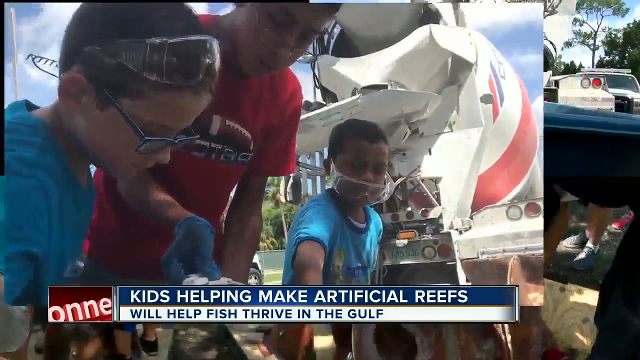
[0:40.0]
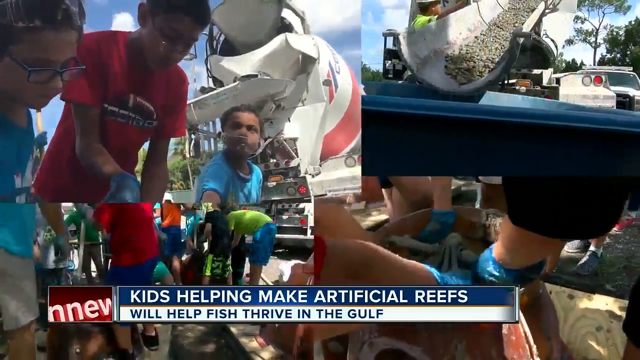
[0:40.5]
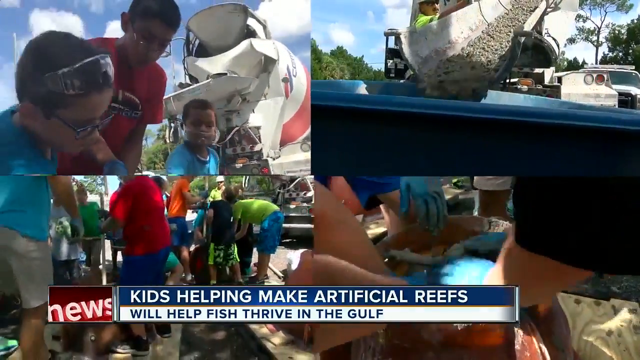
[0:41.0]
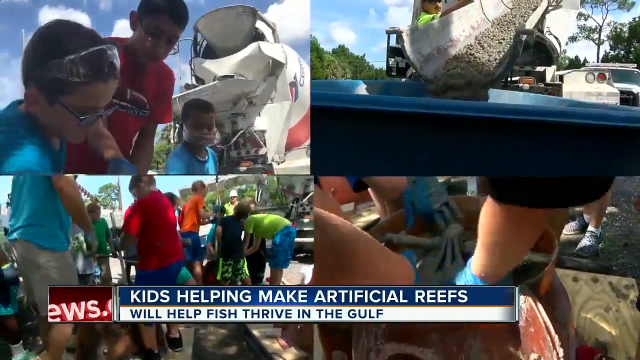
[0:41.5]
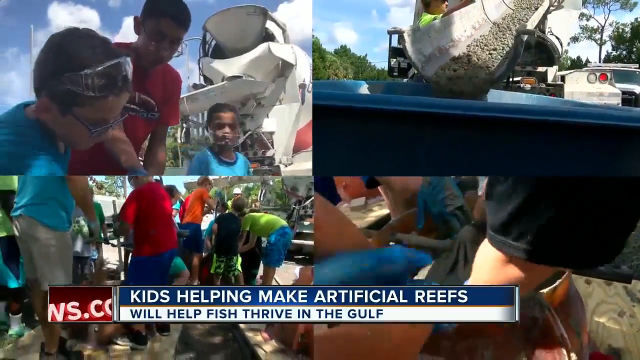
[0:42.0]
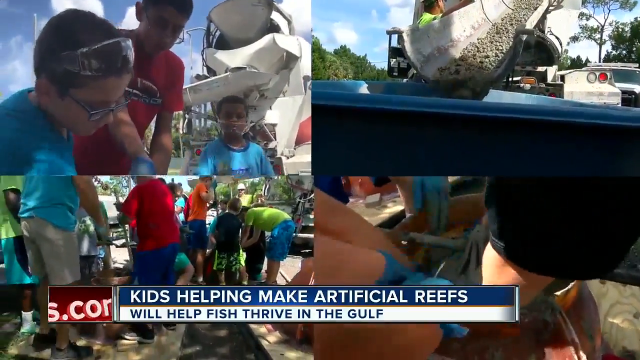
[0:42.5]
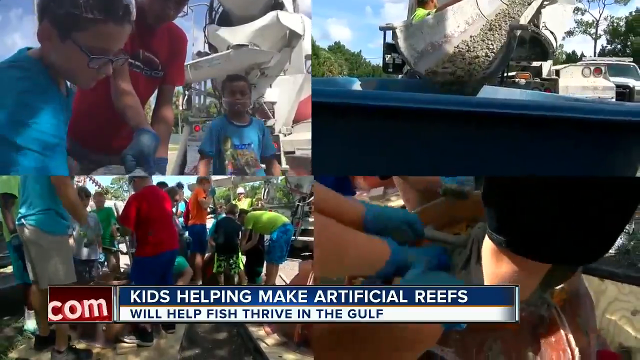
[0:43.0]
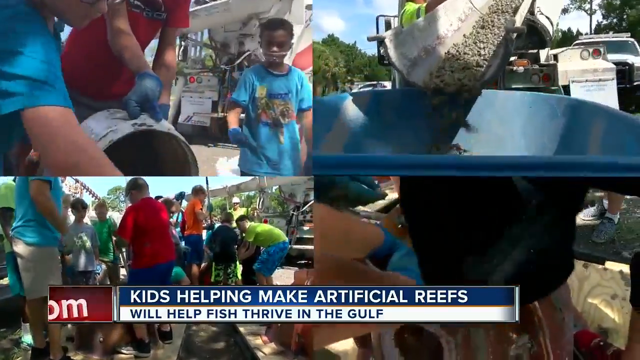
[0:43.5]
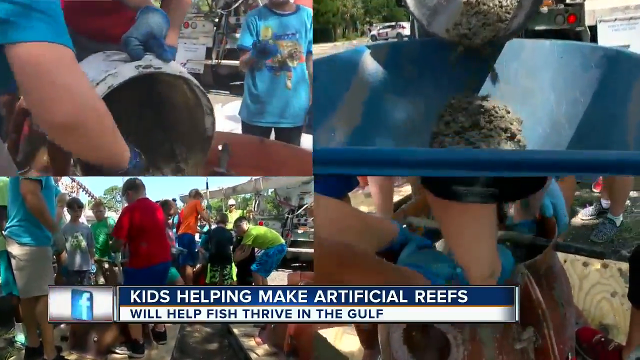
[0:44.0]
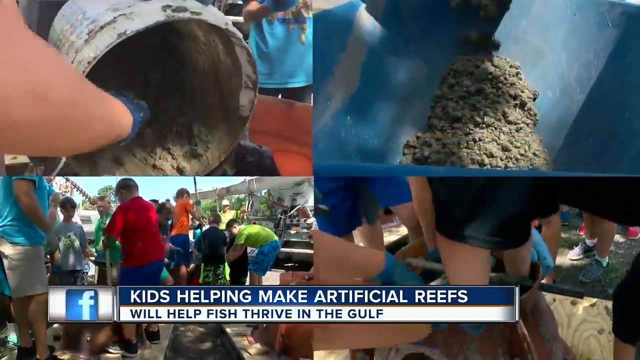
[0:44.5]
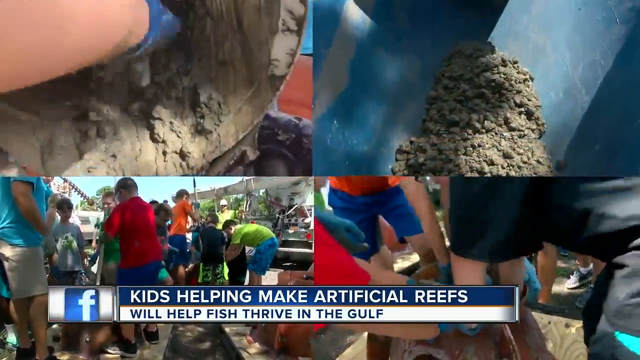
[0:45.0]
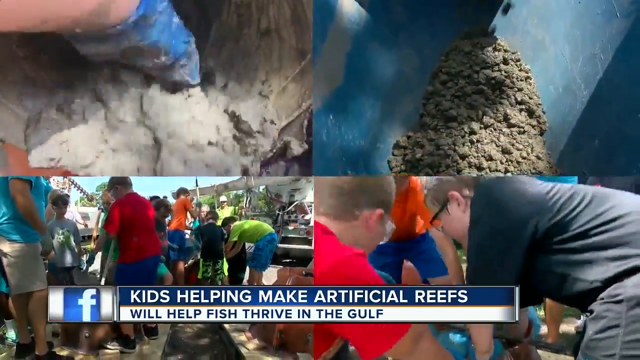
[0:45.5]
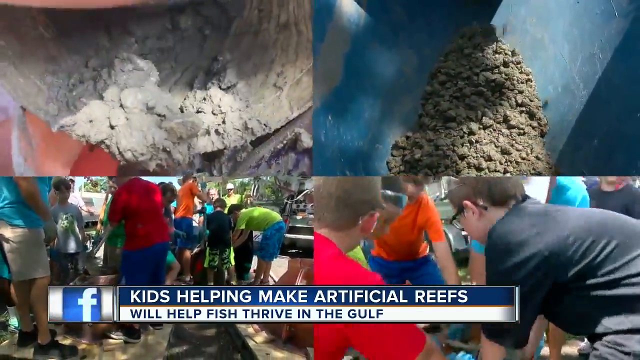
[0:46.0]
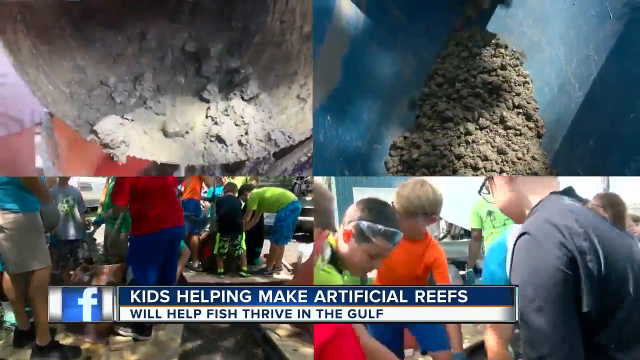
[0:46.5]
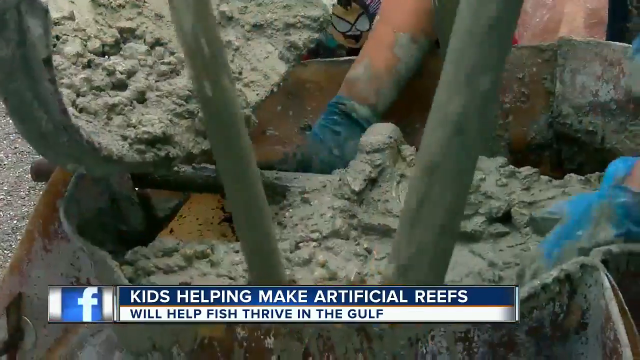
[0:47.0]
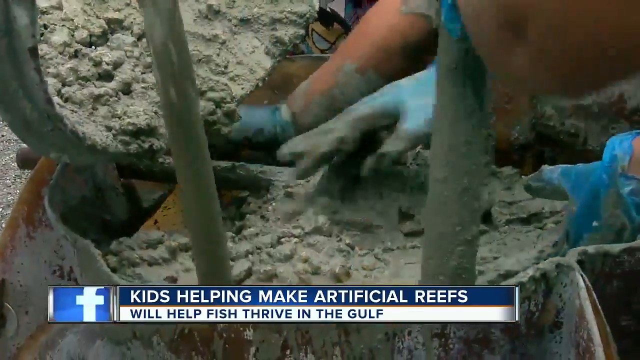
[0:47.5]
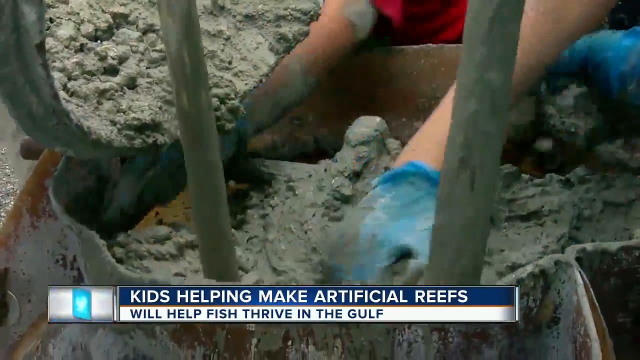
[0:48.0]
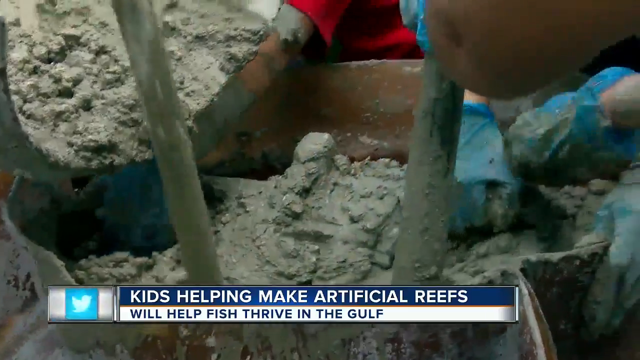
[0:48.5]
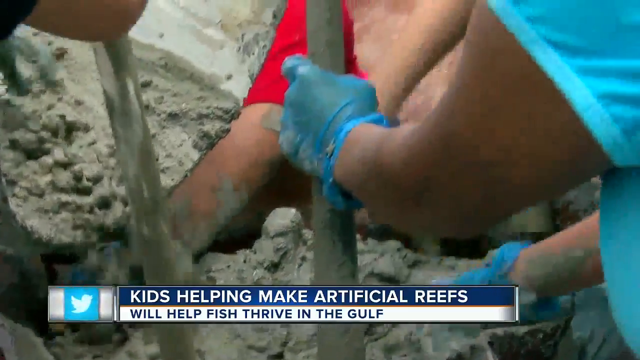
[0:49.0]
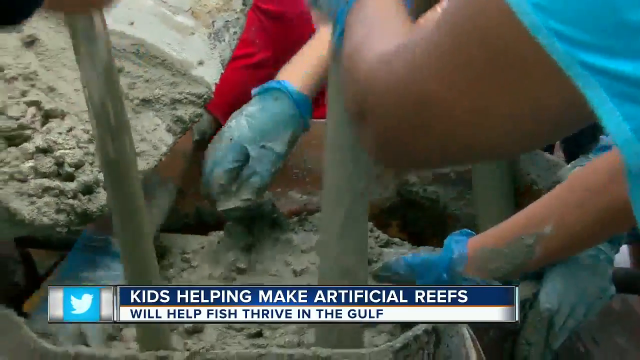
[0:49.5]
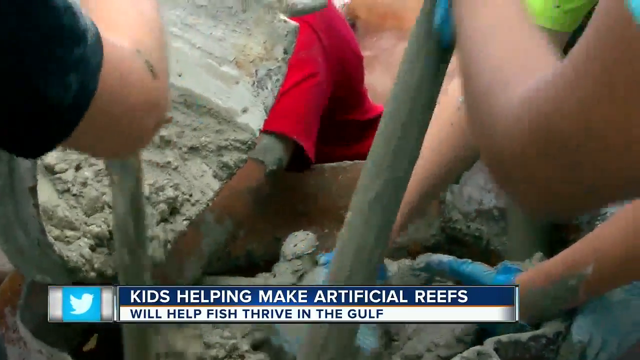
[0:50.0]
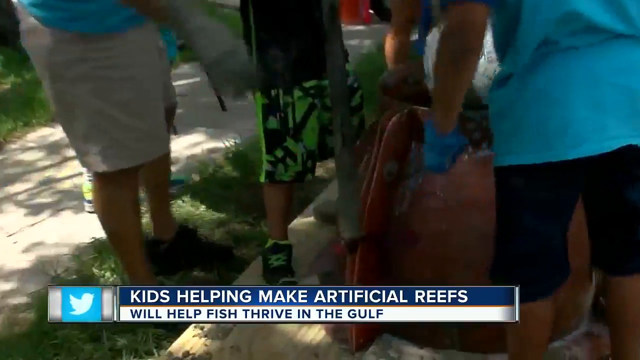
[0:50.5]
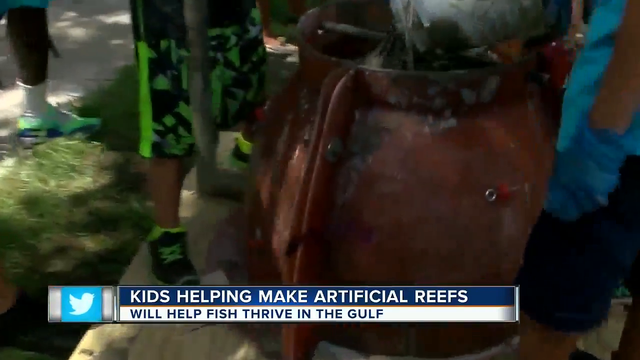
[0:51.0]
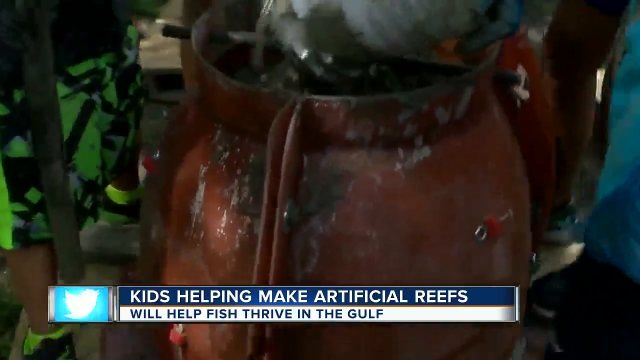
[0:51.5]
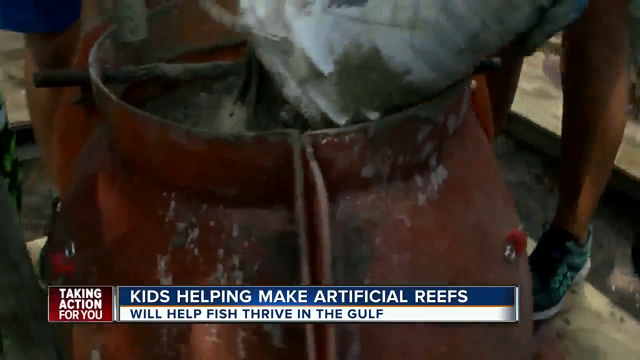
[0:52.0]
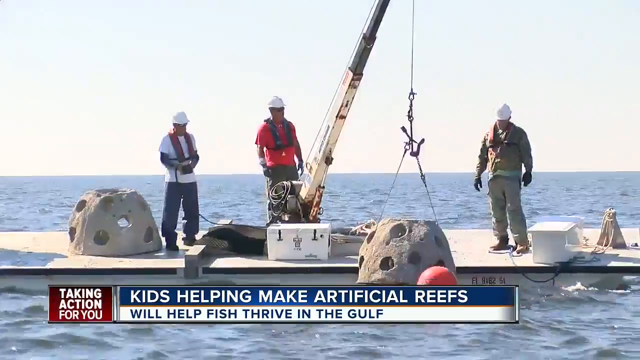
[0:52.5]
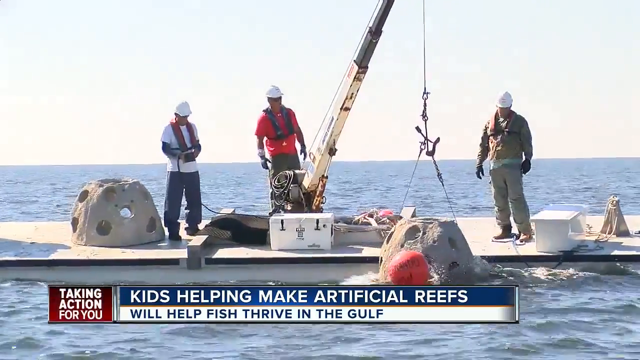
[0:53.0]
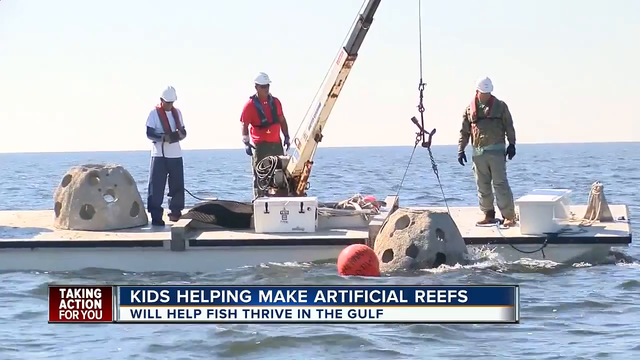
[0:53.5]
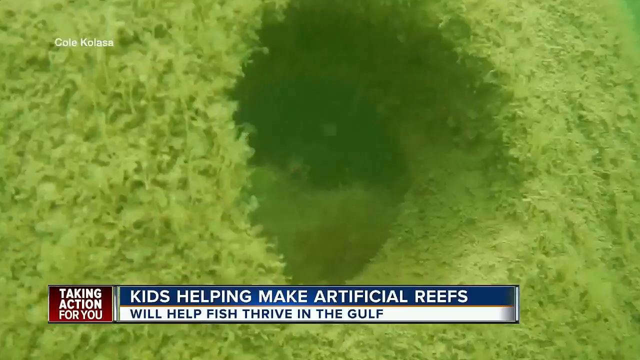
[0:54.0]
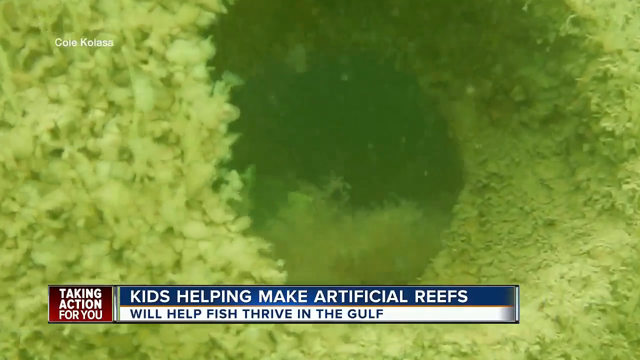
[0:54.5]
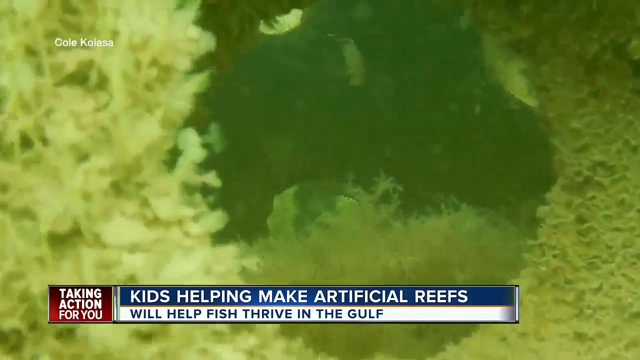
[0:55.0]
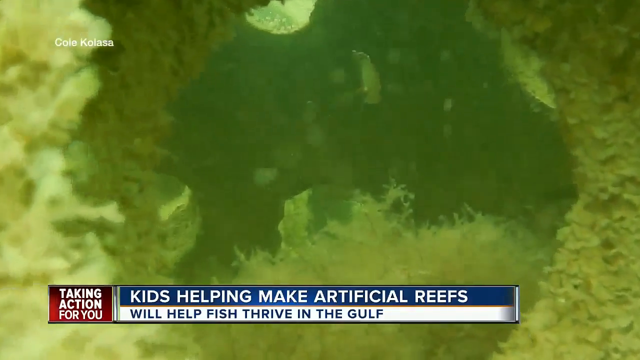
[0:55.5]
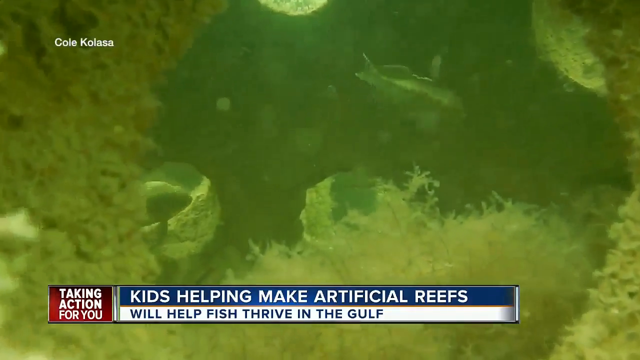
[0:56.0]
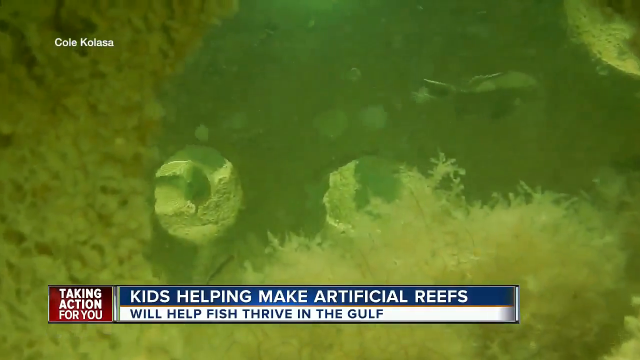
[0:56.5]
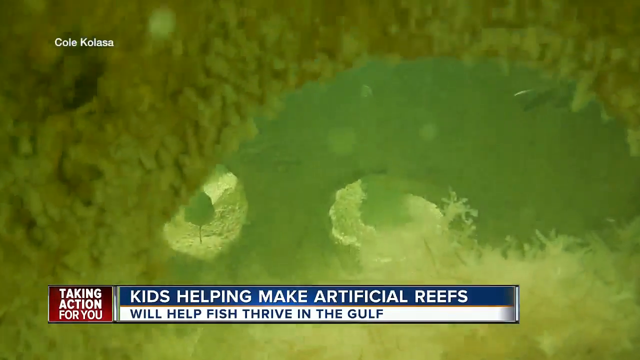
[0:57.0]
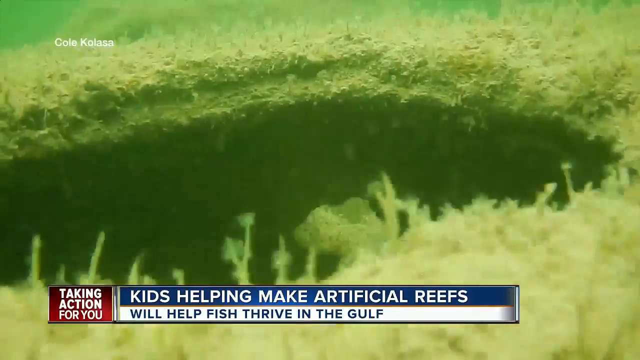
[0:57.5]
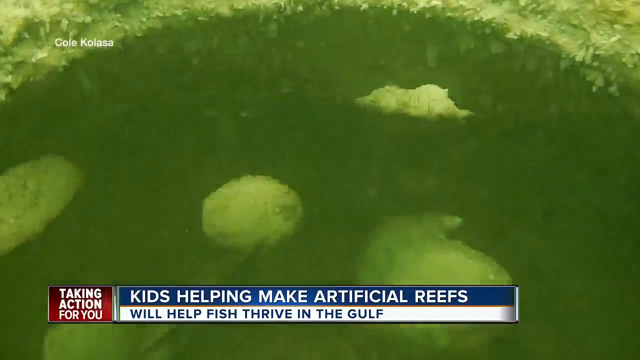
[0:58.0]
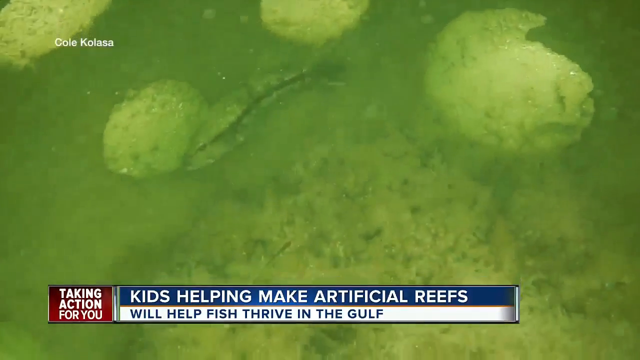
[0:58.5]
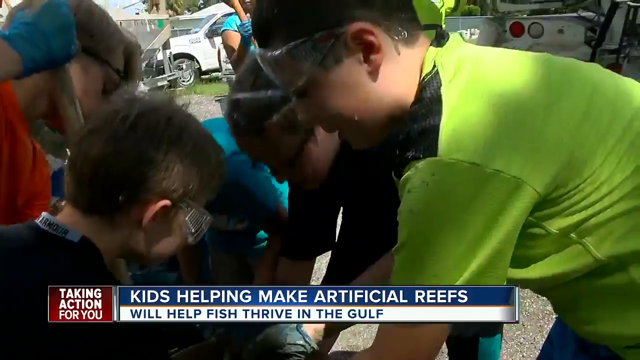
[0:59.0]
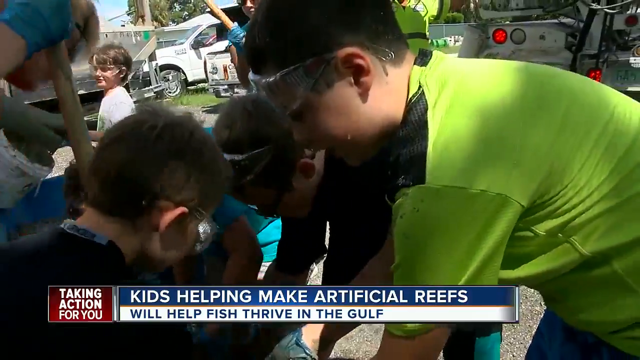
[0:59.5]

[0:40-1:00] The scene transitions to kids gathered in T-shirts of various colors, including black, orange, green, blue, and red. Several children use instruments to sculpt the reef, or use a bucket to push out what appears to be concrete. Another transition shows concrete being poured slowly from a concrete truck, with adults around supervising. Some of the children hold what appears to be a stick as the concrete is poured into the artificial reef, and children wear goggles as the concrete pours very slowly. What appears to be a Caucasian man in a white hat, a baby blue shirt, and gloves comes toward the children and makes sure the concrete is spread evenly. After another transition, a kid holds what appears to be the top of a bucket while another child helps; they grab a piece of the concrete and pat it evenly with their blue gloves.